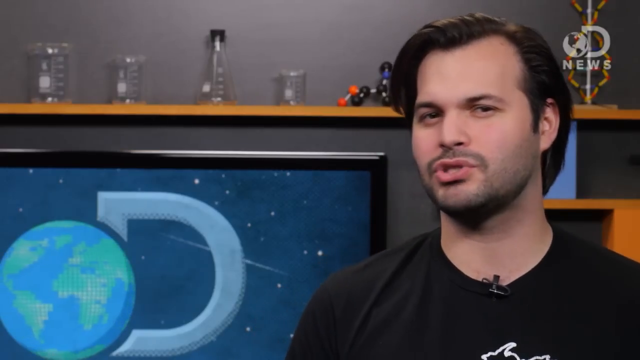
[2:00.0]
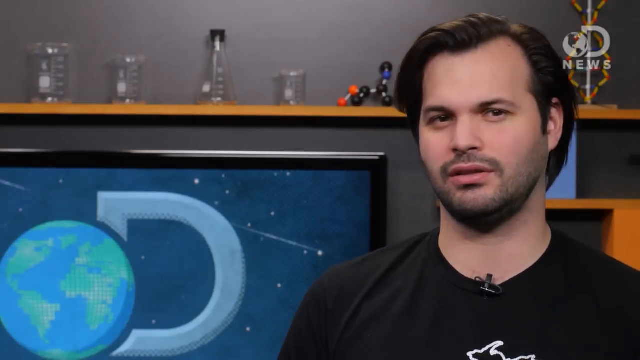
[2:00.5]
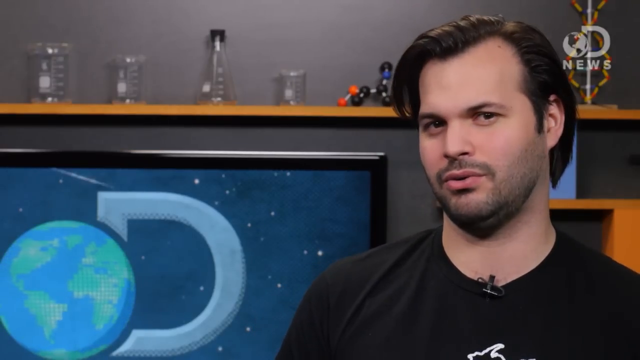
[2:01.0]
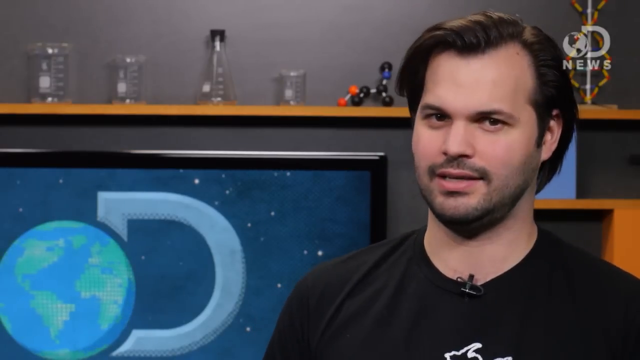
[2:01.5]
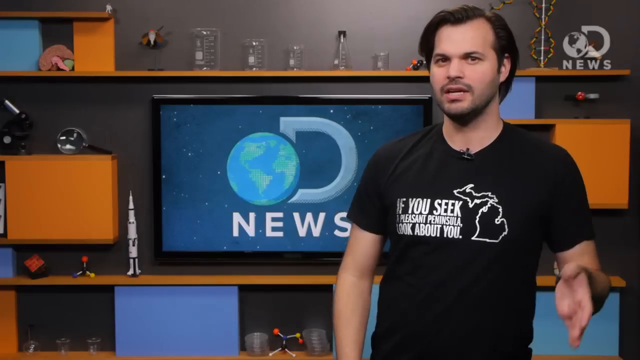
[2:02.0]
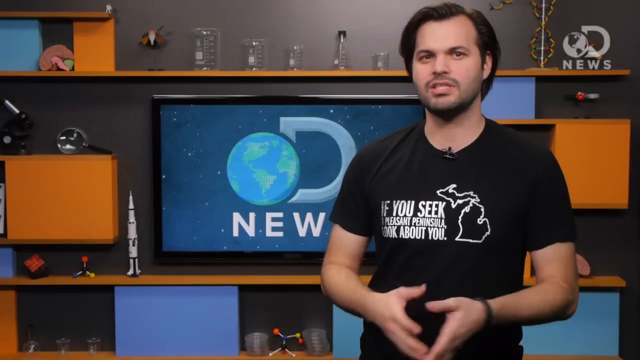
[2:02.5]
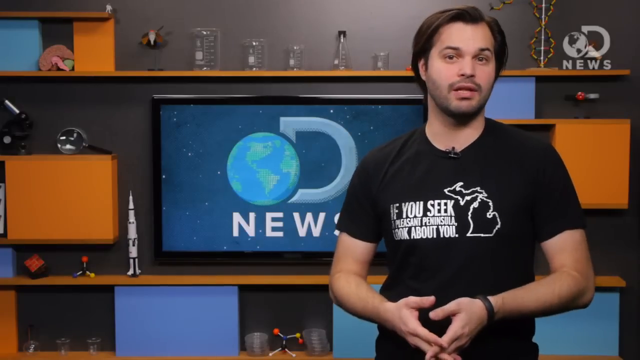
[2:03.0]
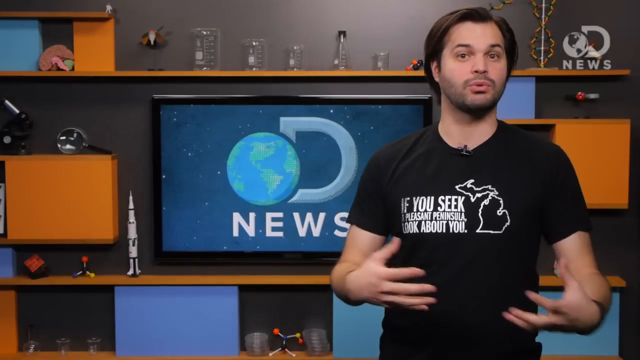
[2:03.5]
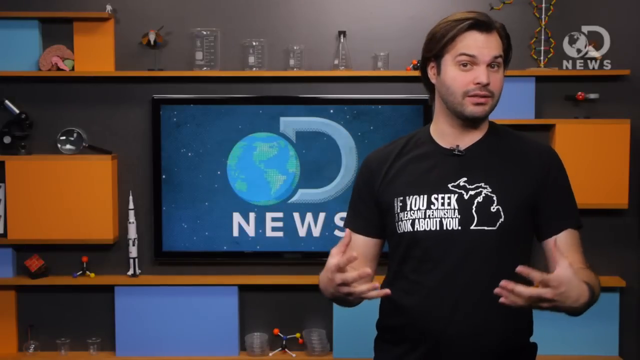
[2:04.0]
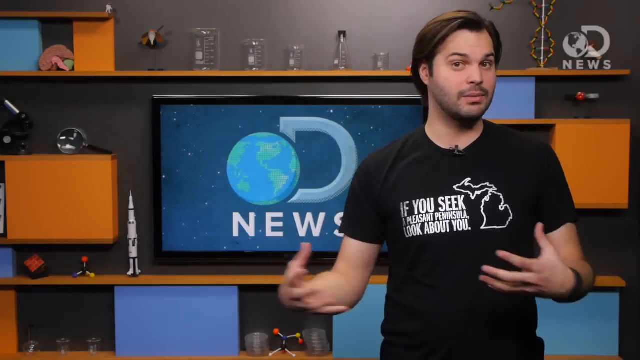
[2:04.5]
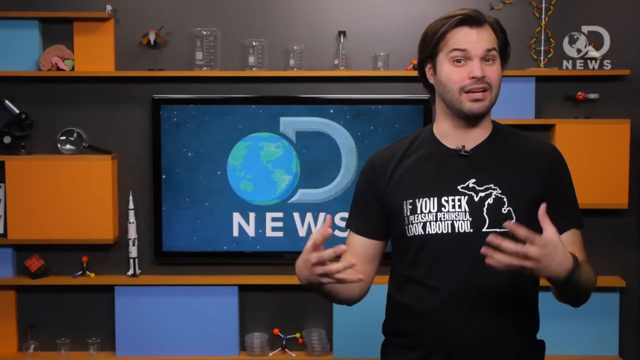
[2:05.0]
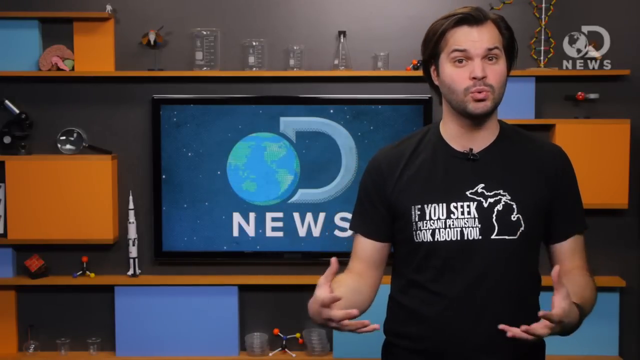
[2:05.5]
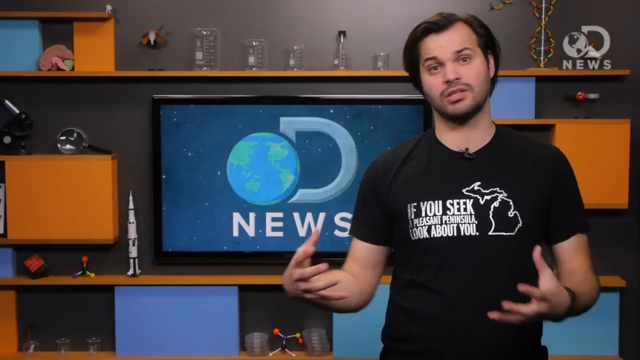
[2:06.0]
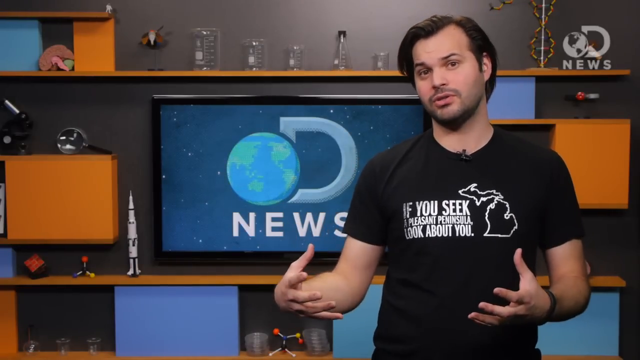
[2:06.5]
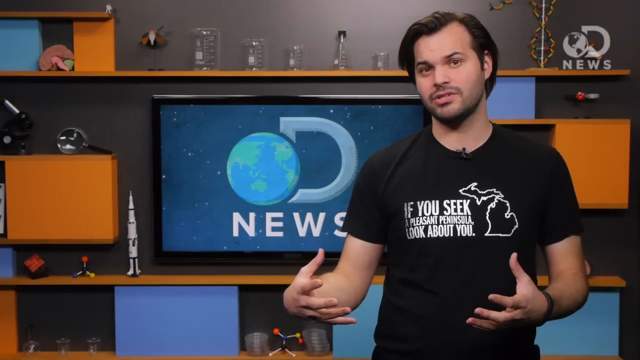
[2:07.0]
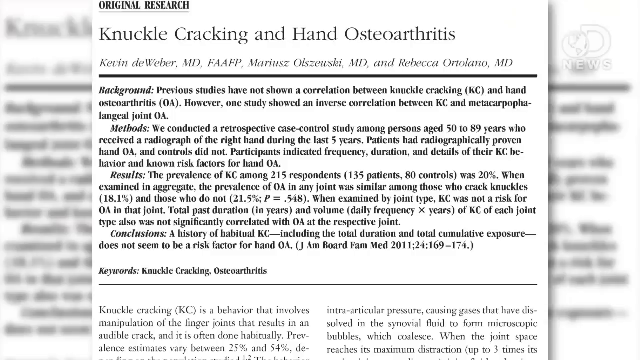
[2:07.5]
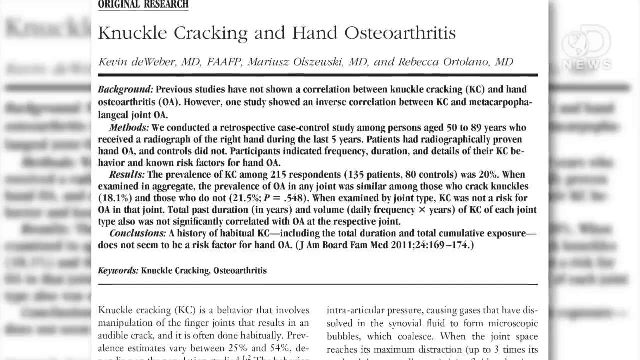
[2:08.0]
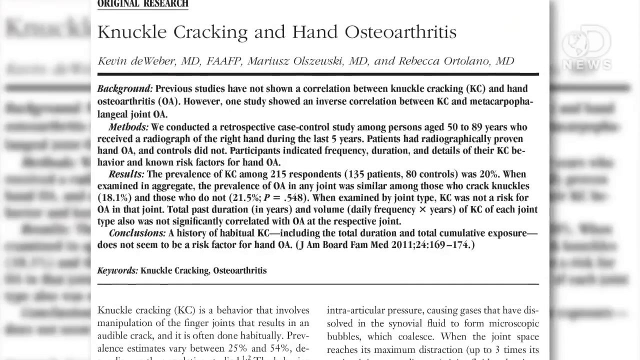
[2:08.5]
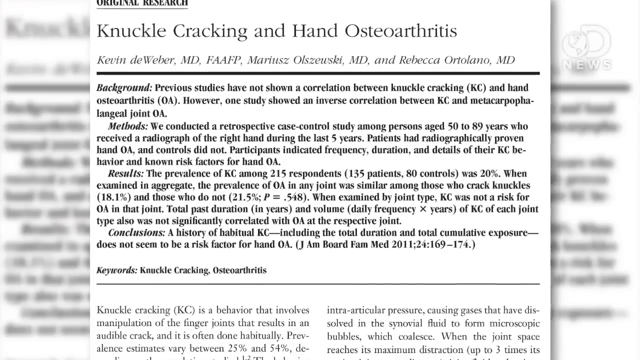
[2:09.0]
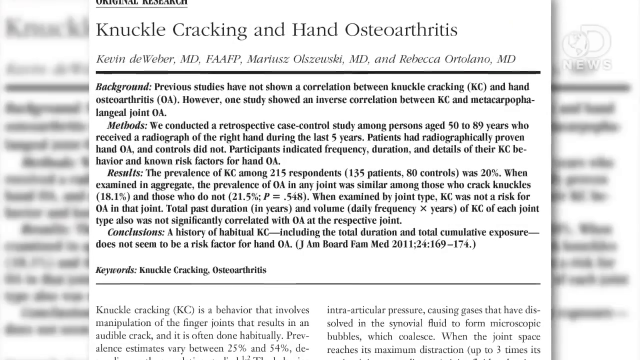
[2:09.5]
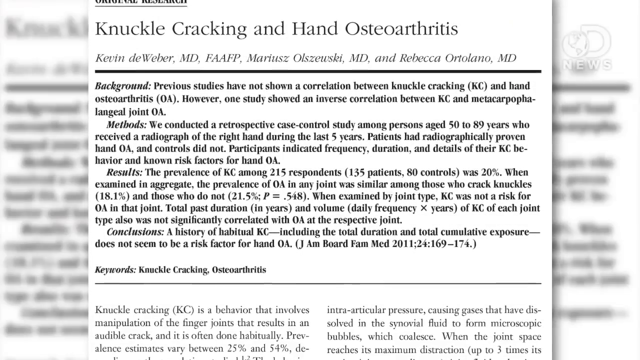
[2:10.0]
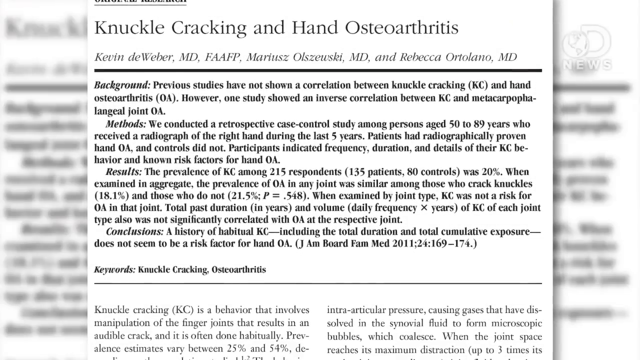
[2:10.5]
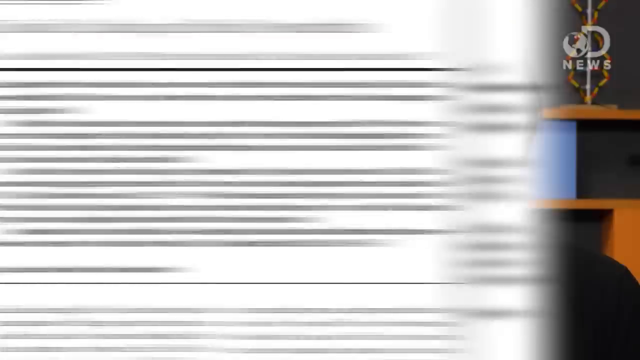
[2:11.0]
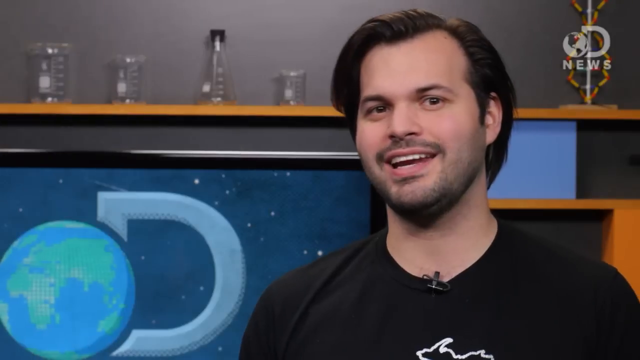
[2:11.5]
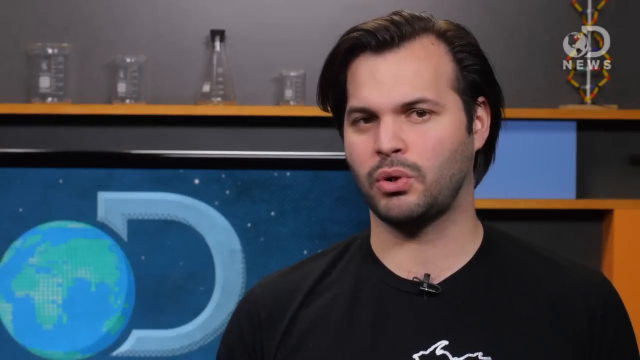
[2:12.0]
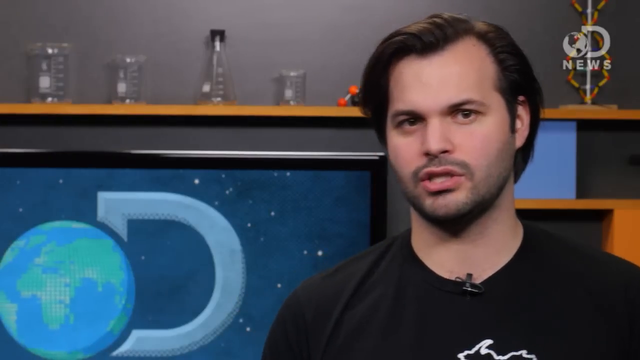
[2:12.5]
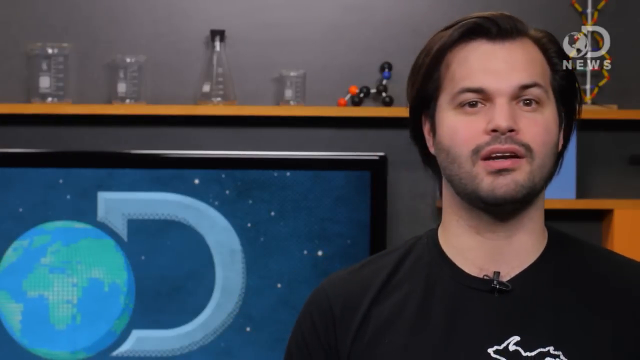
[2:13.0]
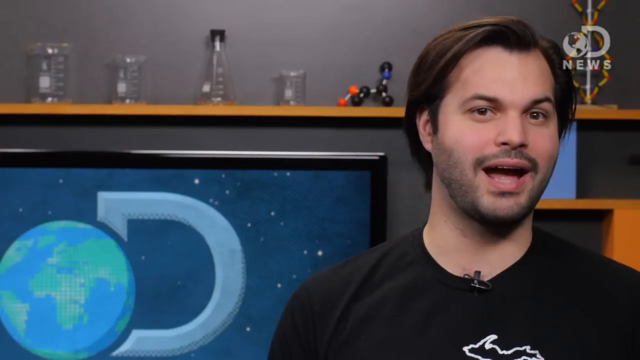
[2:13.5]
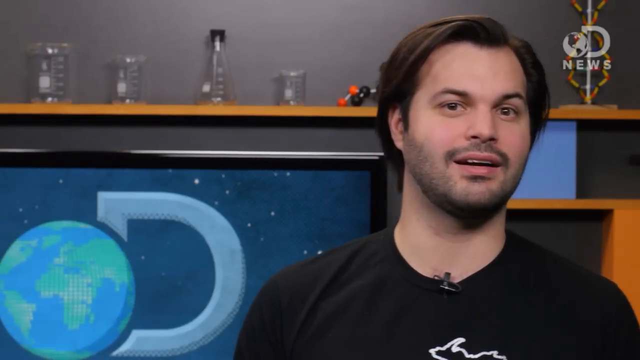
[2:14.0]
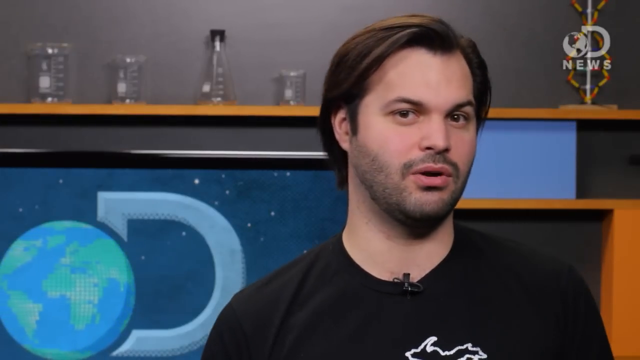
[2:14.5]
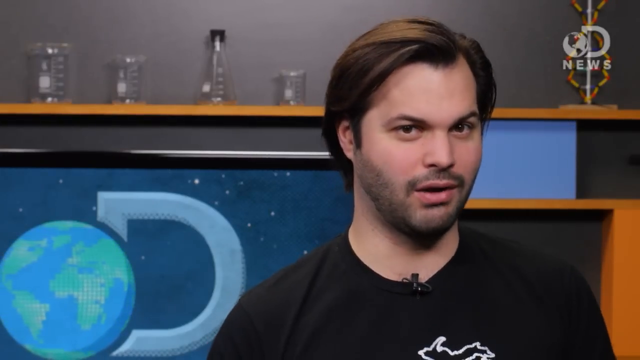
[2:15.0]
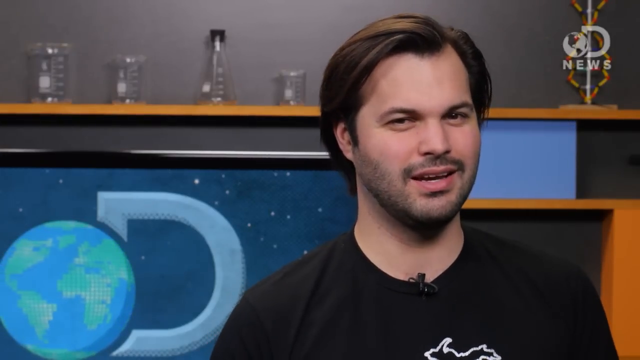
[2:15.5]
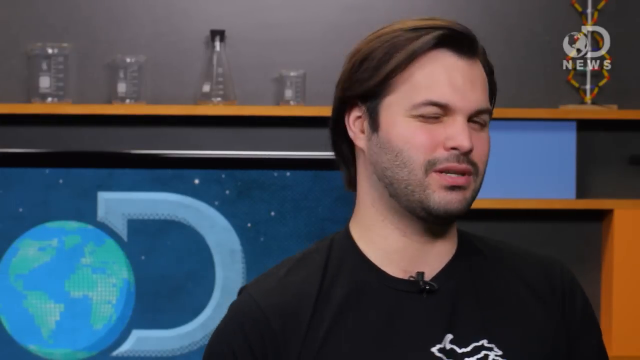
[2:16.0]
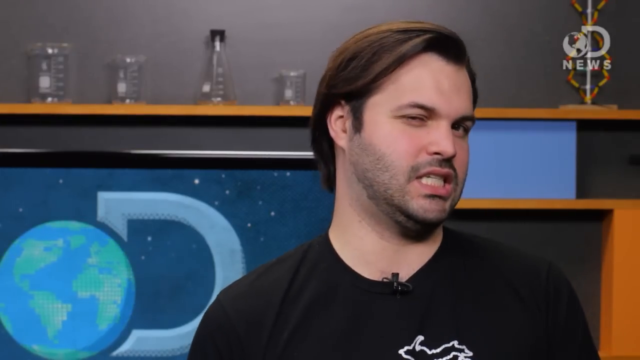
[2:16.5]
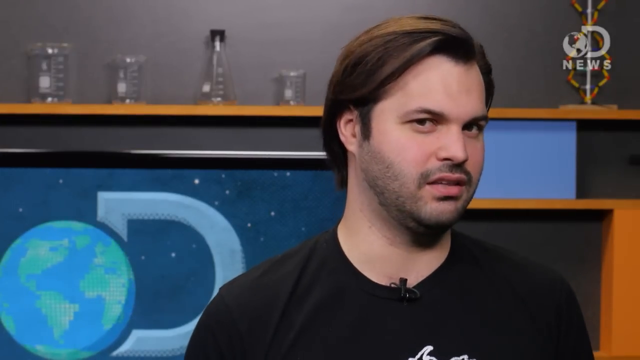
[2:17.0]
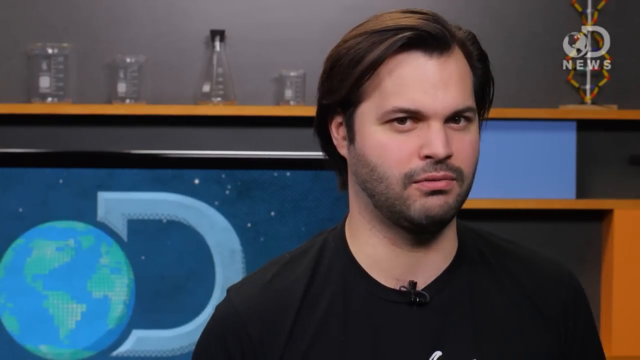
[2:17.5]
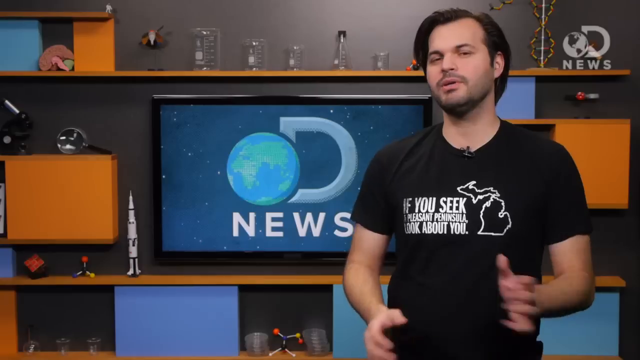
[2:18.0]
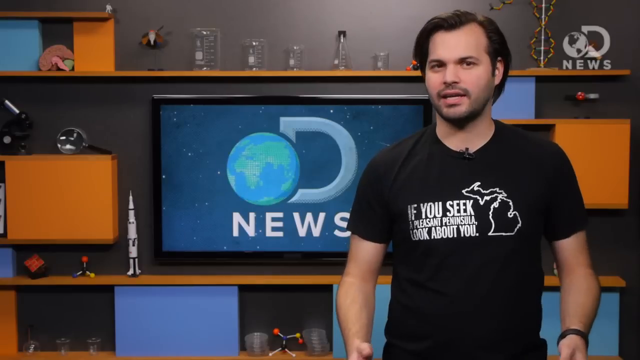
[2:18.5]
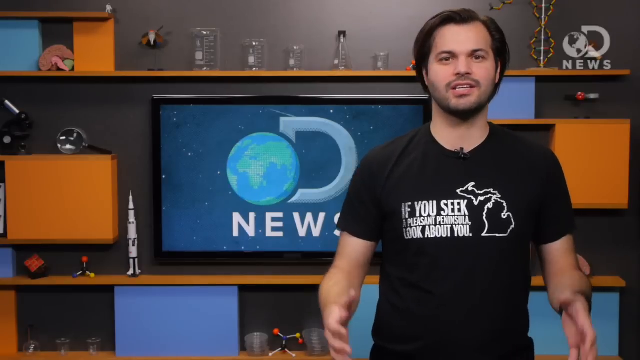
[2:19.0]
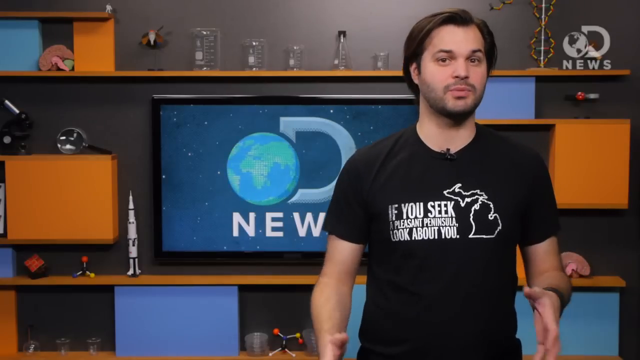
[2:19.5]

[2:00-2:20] A close-up shows Trace in front of the same background. Text comes up on the screen: "knuckle cracking and hand osteoarthritis", followed by a passage beginning "Background previous studies have not shown a correlation between knuckle cracking and hand osteoarthritis, however, one study showed an inverse correlation between".